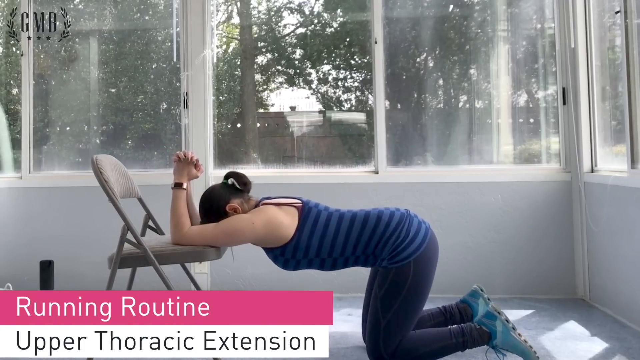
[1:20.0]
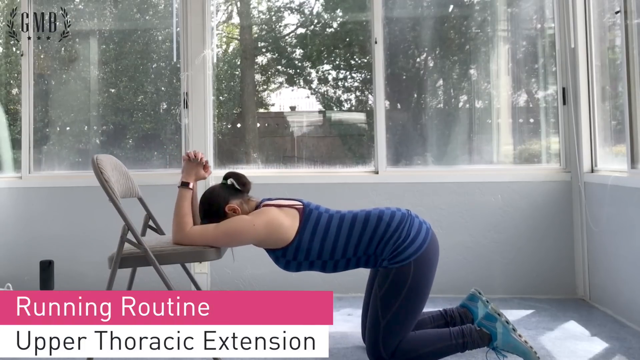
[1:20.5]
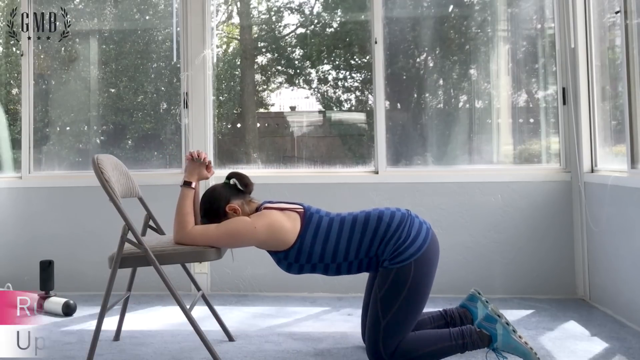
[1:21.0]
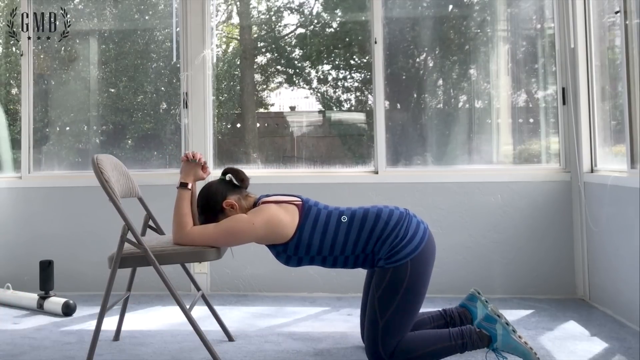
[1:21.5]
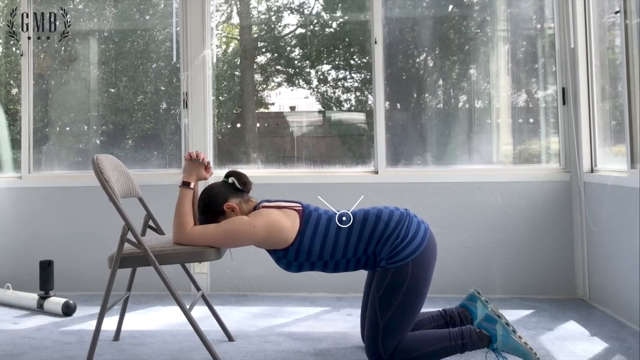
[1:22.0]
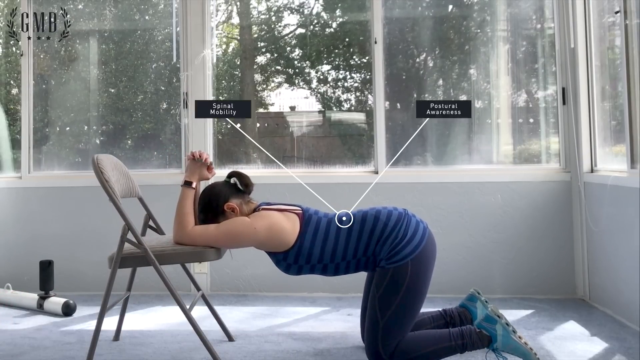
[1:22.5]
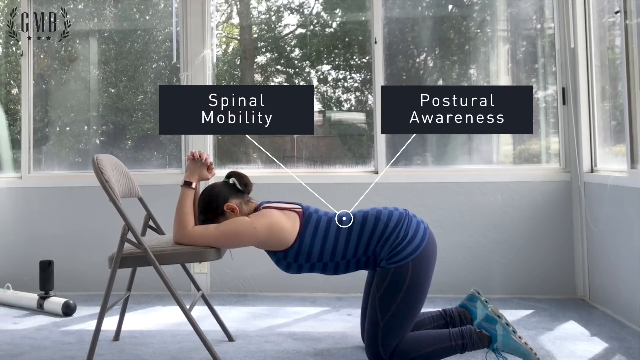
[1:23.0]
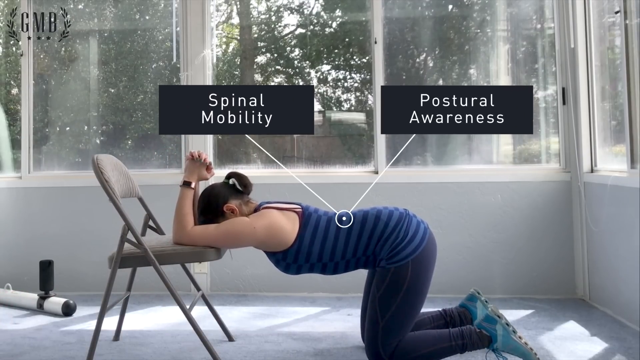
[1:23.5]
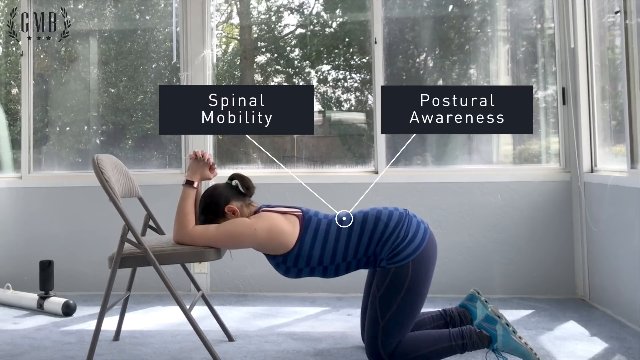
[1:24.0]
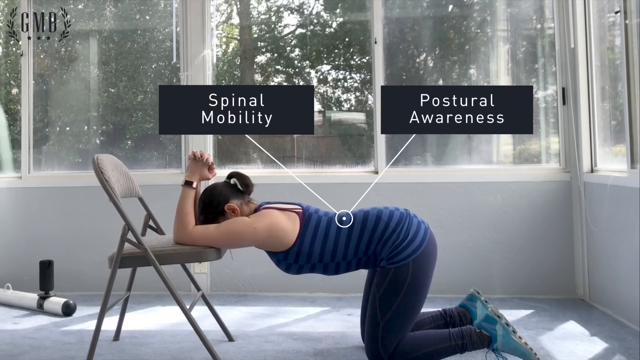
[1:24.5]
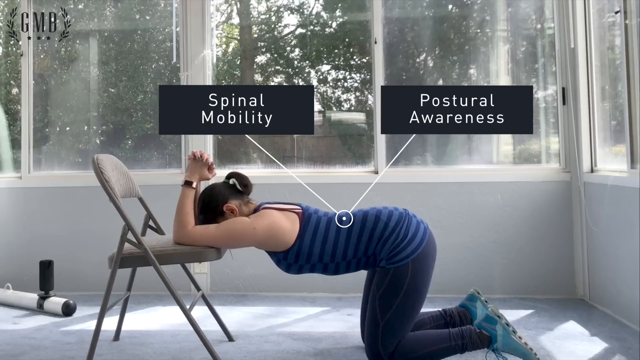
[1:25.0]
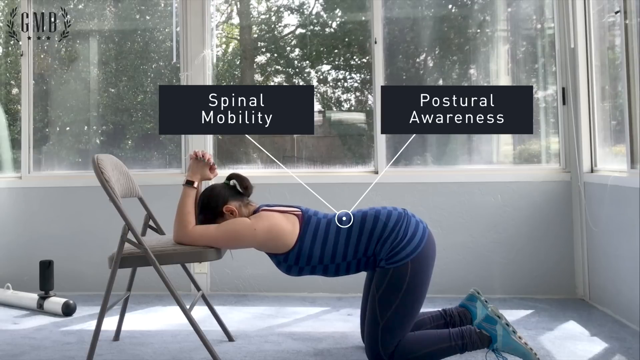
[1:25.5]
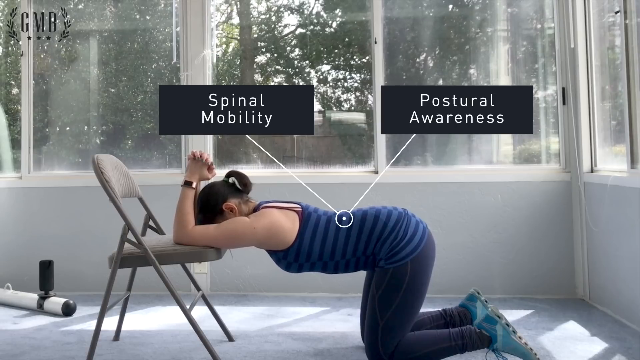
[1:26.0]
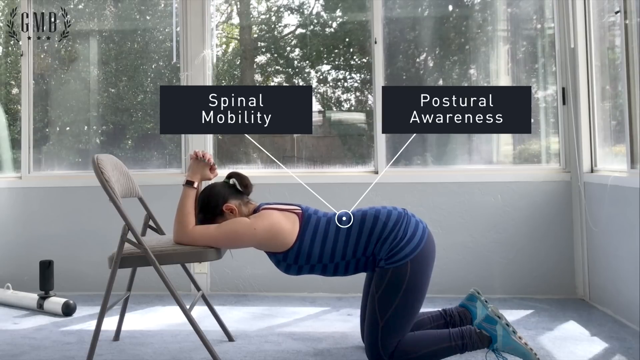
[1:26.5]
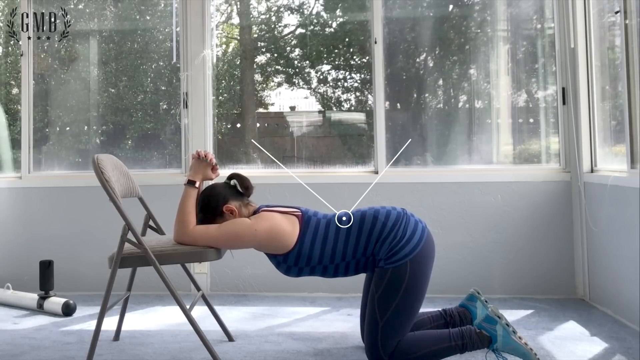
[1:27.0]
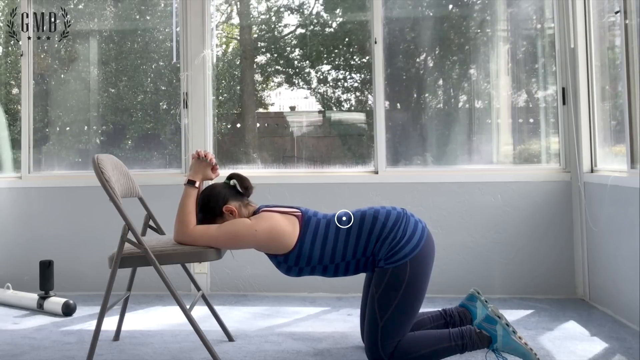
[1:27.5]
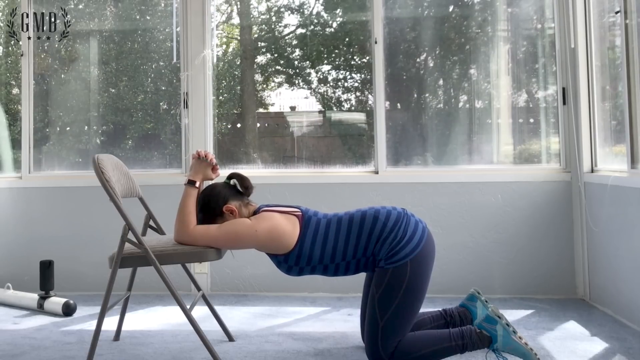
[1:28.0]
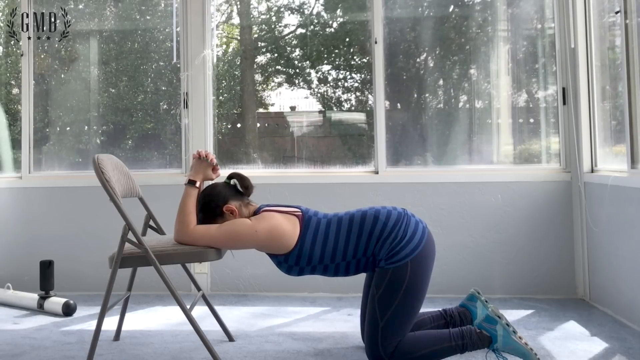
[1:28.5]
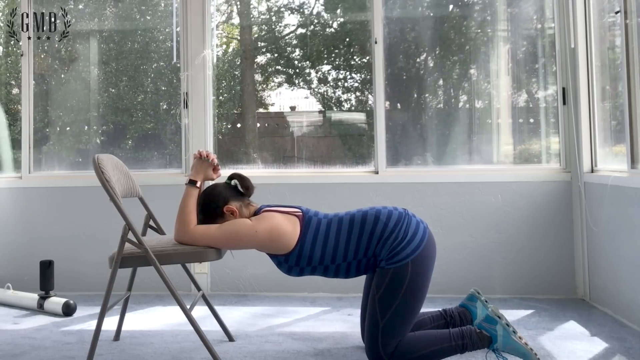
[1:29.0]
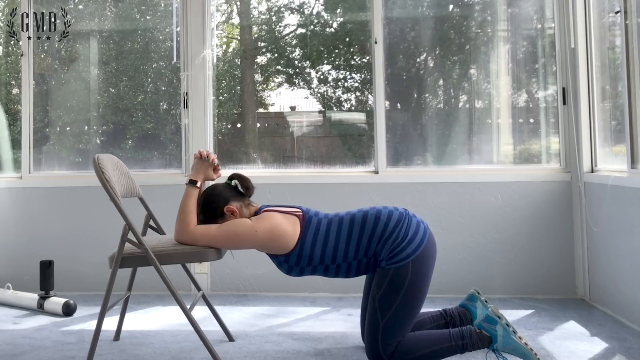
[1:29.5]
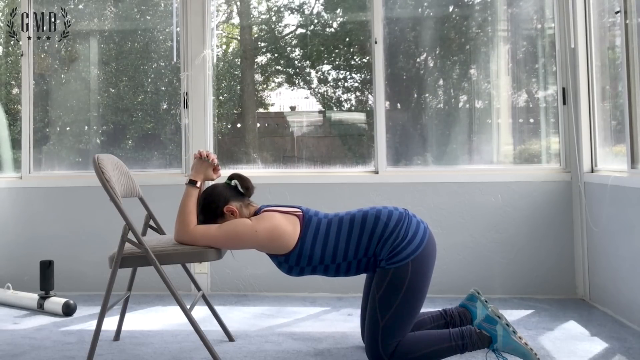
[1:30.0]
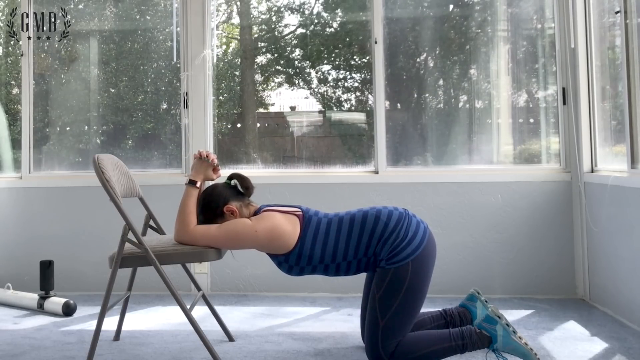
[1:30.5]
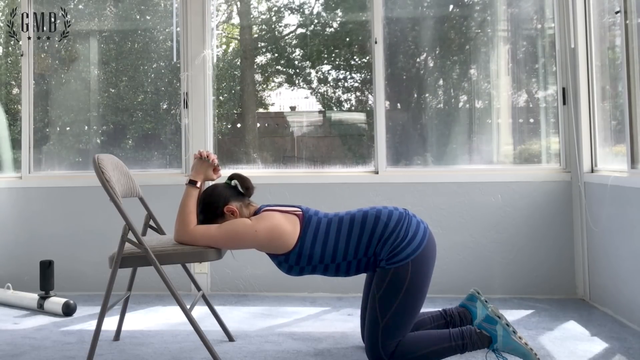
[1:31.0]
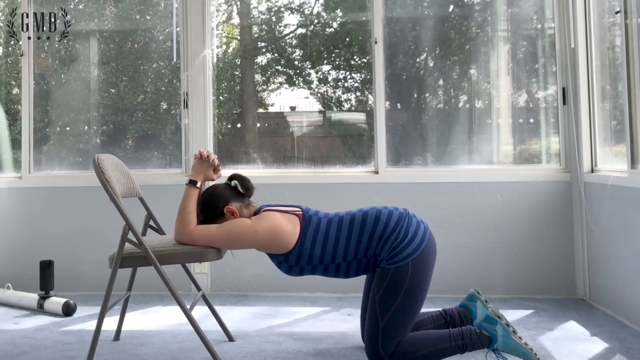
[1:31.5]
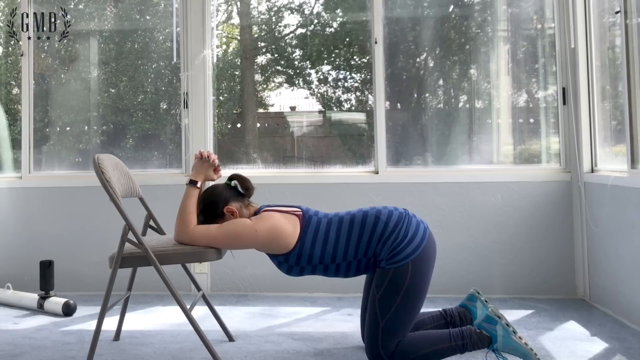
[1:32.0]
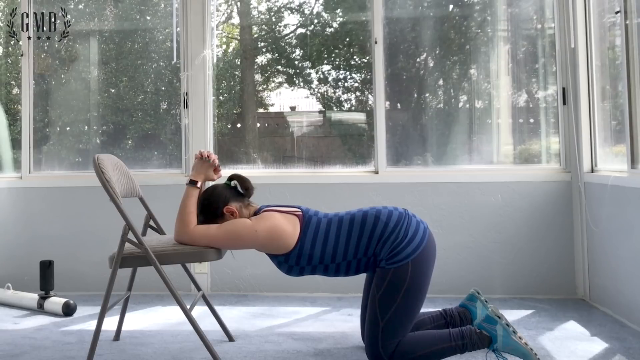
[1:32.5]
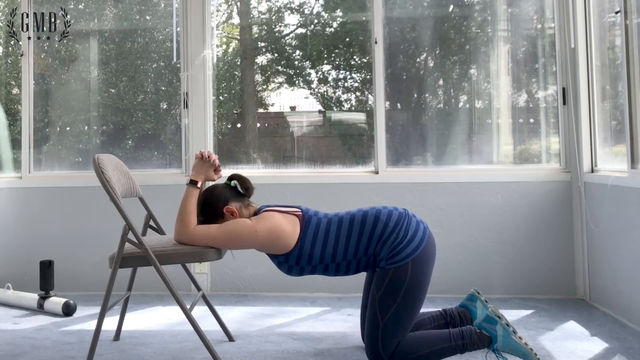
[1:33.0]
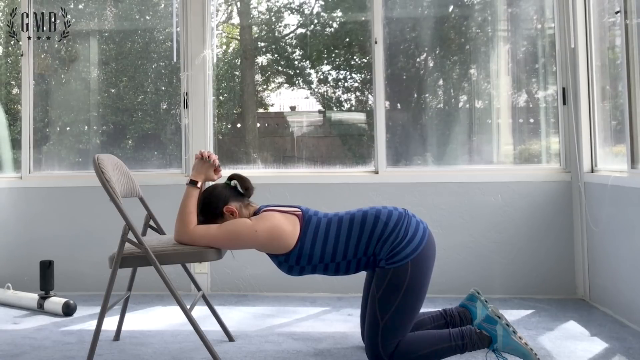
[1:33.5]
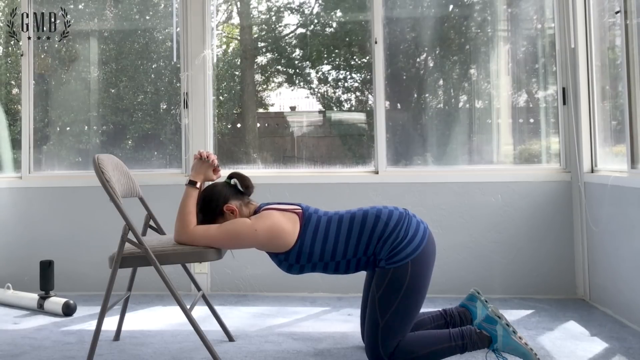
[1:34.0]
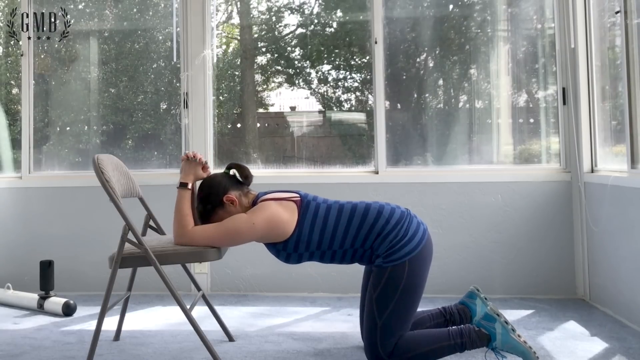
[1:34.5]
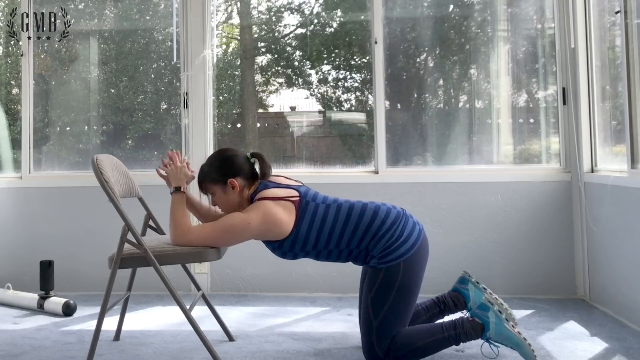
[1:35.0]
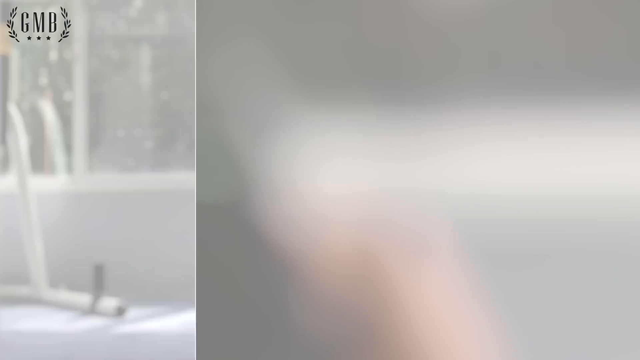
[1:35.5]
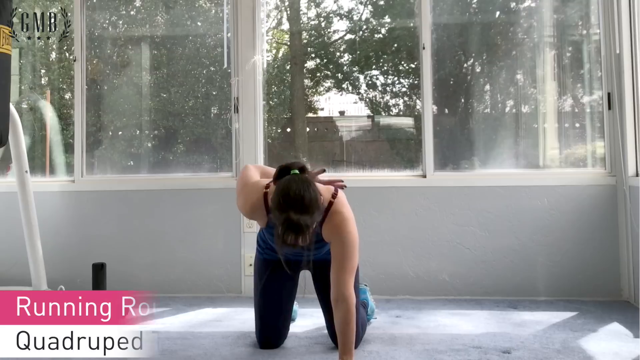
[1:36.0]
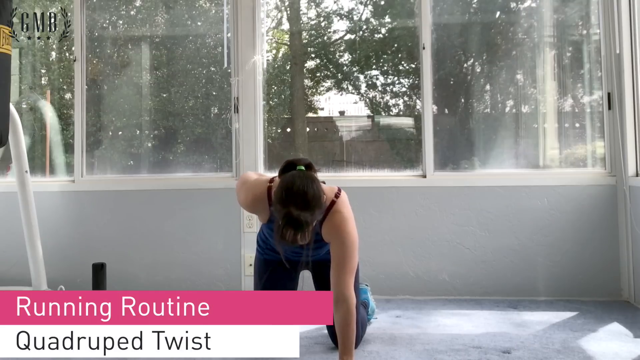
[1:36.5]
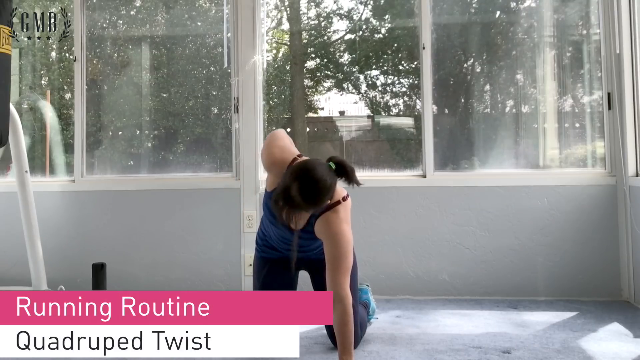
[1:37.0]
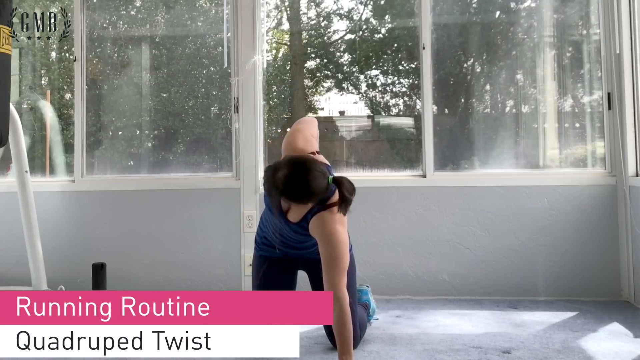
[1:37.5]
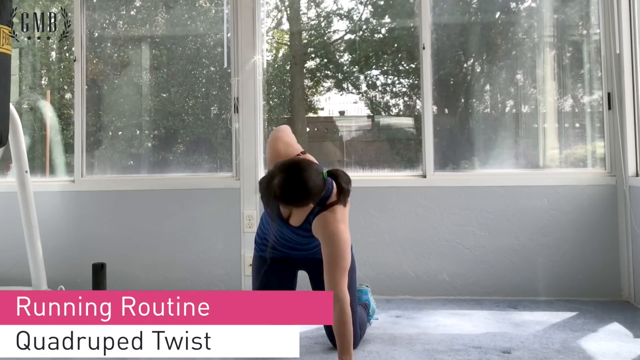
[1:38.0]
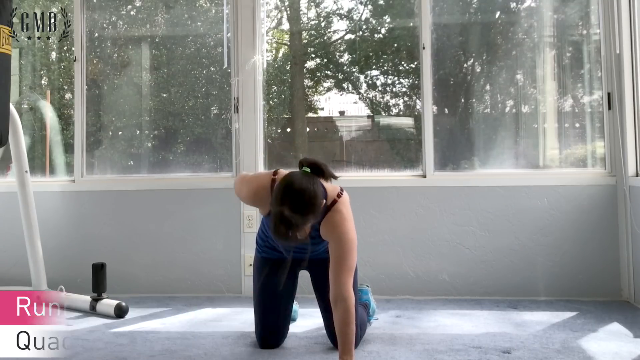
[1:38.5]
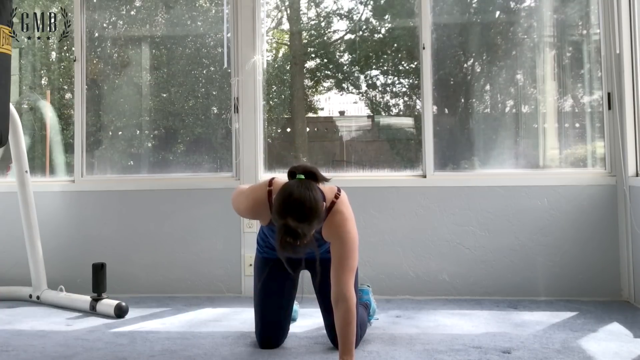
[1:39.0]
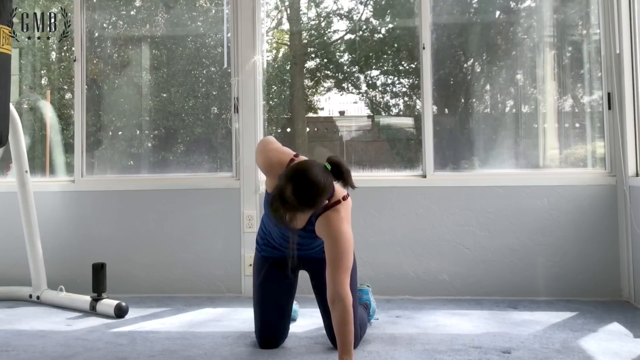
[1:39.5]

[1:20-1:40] A woman is hunched over a gray folding chair. She wears a striped tank top in different colors of blue, very tight pants and light blue shoes. A pink banner with white lettering at the bottom says "Running Routine." Her elbows are flat on the chair's cushion and her hands are clasped together above her head, and she slowly moves her chest up and down. A white dot appears on her back with two lines coming out from it, each with a pop-up: the left one says "Spinal Mobility" and the right one says "Postural Awareness." The whole time she very slowly moves her chest up and down, her back pretty much level with the windows behind her. The dot and the pop-ups disappear, and she kind of holds still for a second; her stomach moves down and up a little as she breathes. She moves up a little on her elbows, and the video switches to another screen, looking straight at the top of her head. She is down on her knees with one hand on the ground and her left hand behind her back, and a pink banner at the bottom says "Running Routine." With her head facing straight down, she lifts her left elbow into the air so that it faces straight up, then brings it back down, several times. A white dot appears with a line going to the upper left.